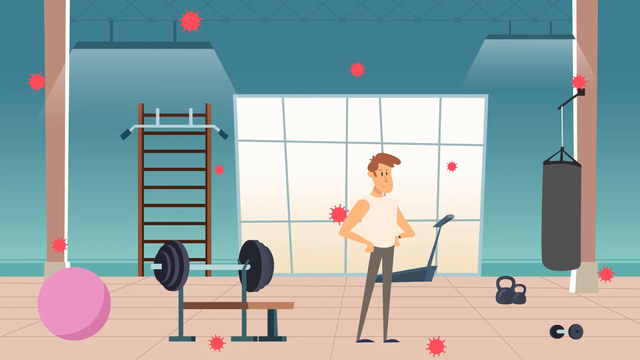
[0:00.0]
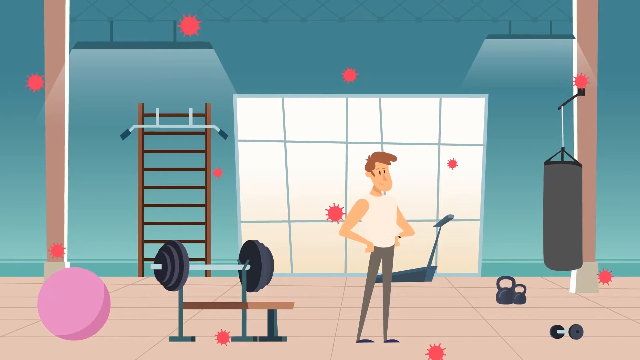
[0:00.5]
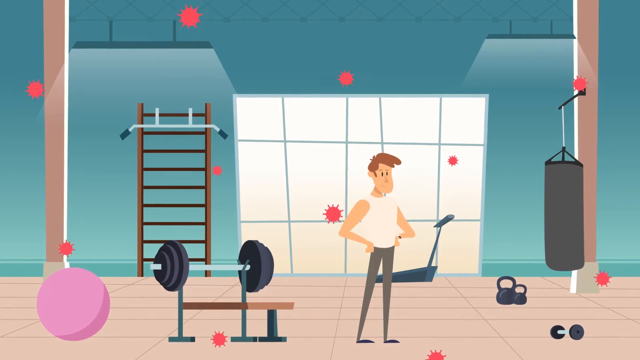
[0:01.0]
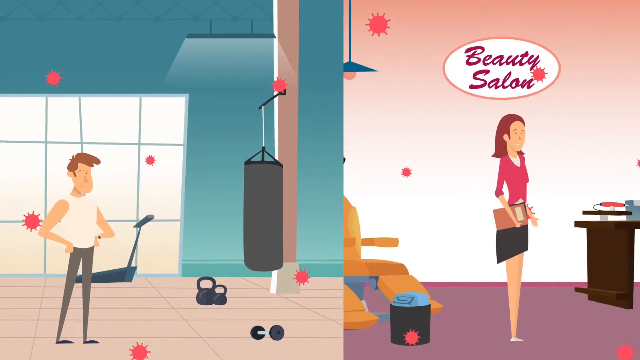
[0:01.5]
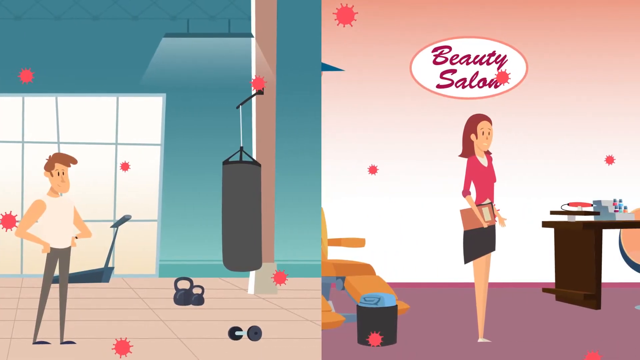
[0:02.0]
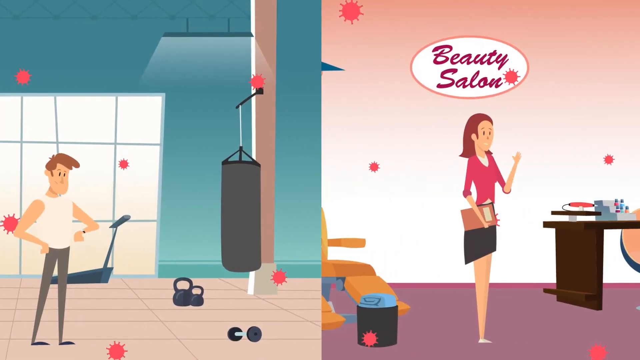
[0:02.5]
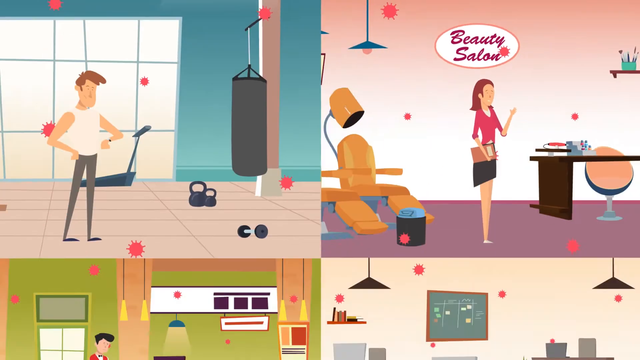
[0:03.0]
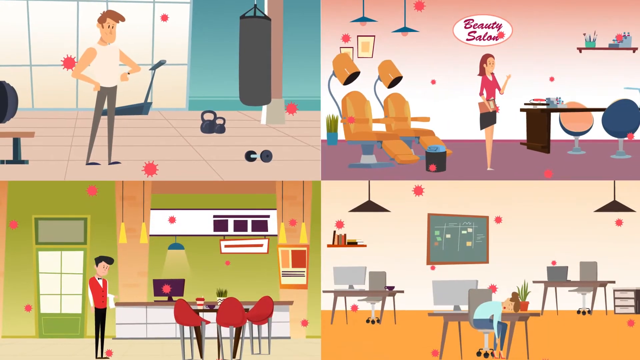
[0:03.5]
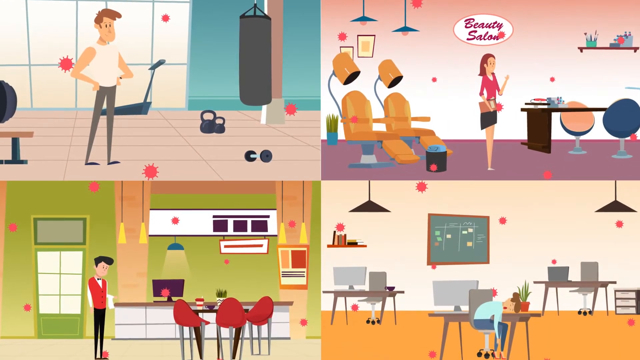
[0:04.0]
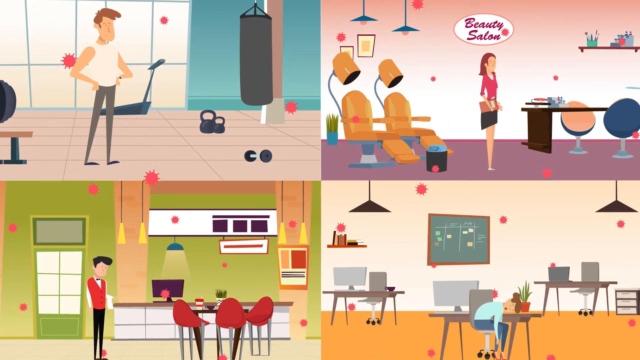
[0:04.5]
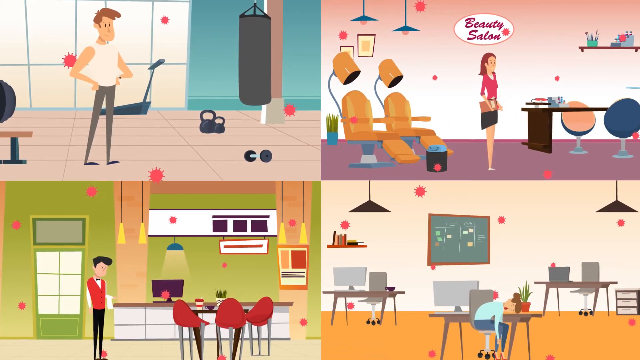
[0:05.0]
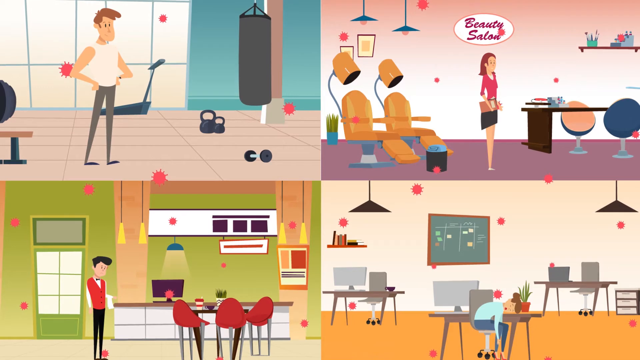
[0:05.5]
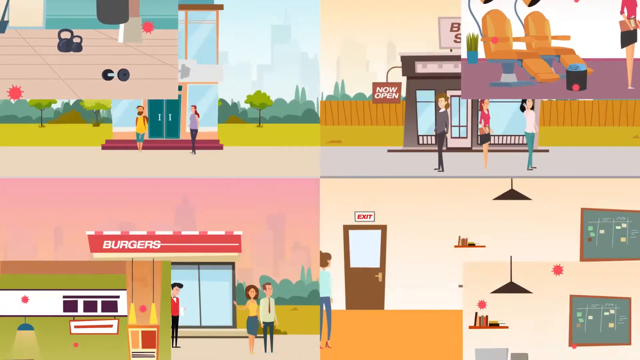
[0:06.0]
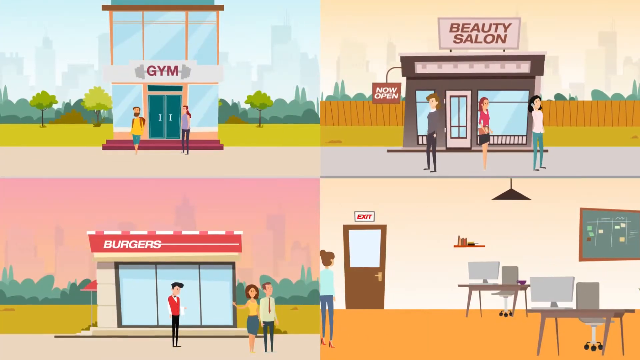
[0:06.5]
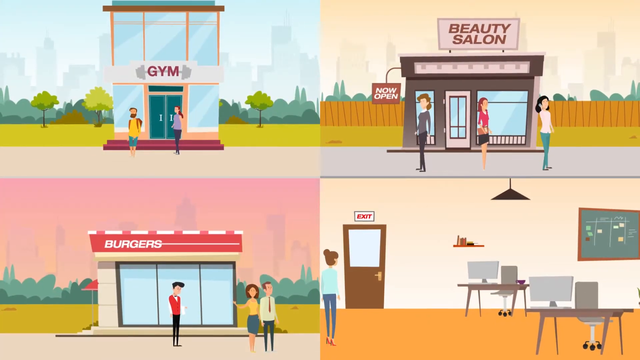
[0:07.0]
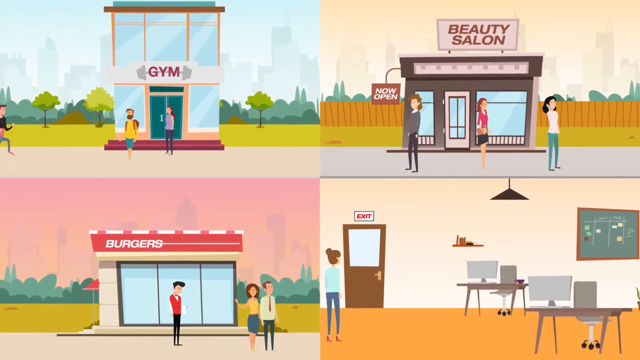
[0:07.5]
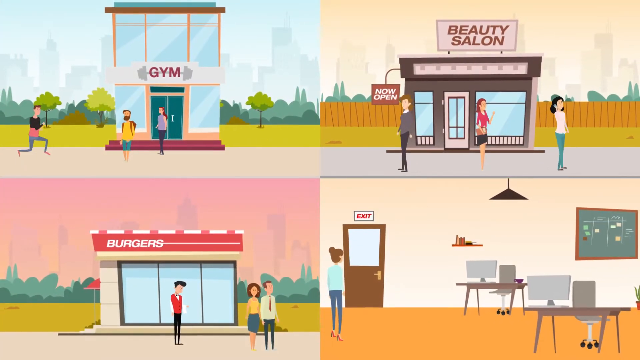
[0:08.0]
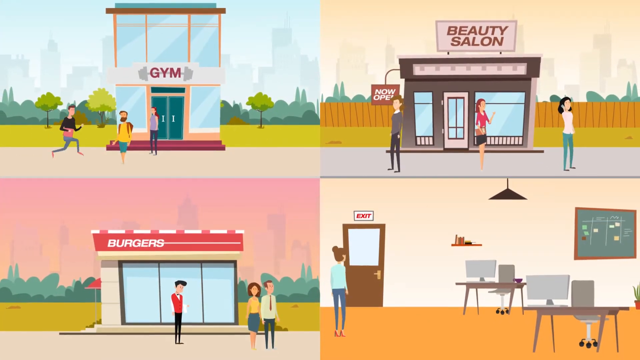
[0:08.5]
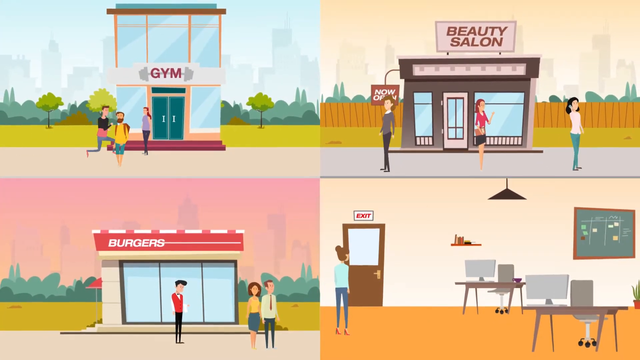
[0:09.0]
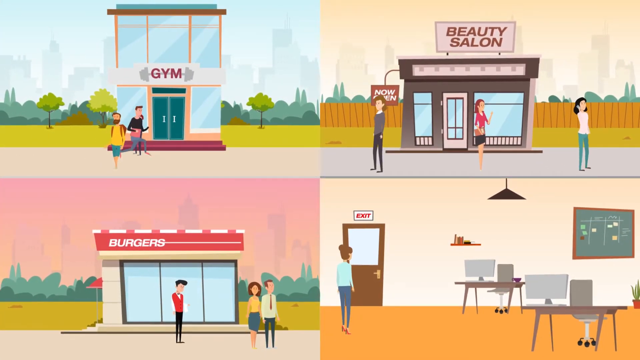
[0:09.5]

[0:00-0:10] The video is animated. The first screen shows a man standing inside a gym with his hands on his hips, with gym equipment including weights, a cardio machine and a punching bag. Red circles with spikes around them appear, possibly to represent germs. The scene shifts to the inside of a beauty salon, where a woman is standing, with a table and chairs where people would sit for hair appointments. Next, a man stands in a restaurant, and then a man sits in a chair with his head on a desk in what looks like a classroom. After these four interiors, the scene shifts to the exteriors, showing the outside of the gym, the beauty salon, a restaurant and a school.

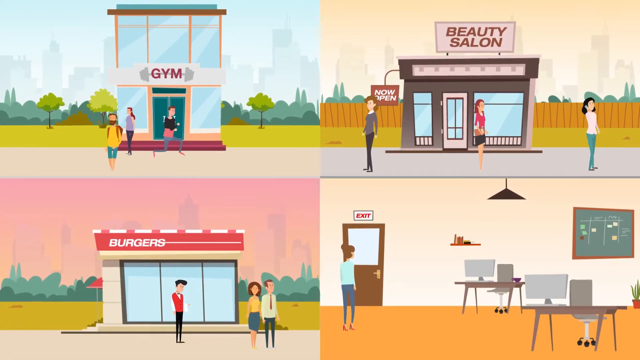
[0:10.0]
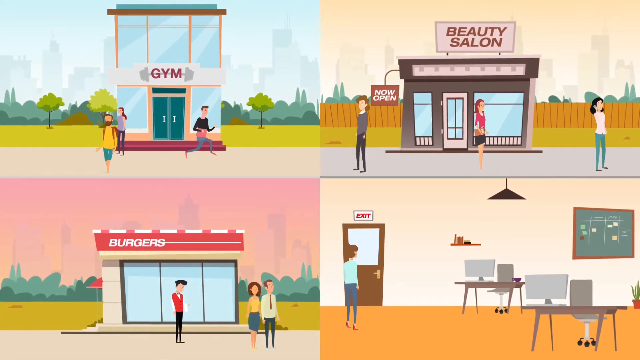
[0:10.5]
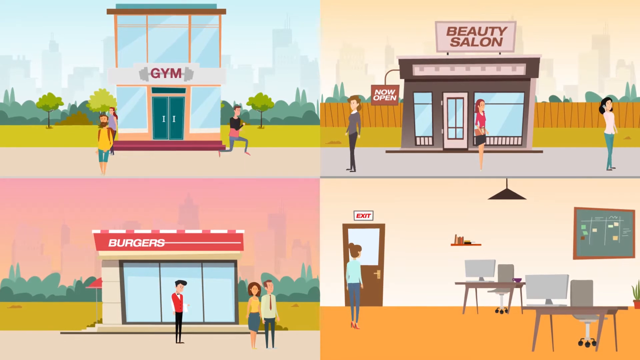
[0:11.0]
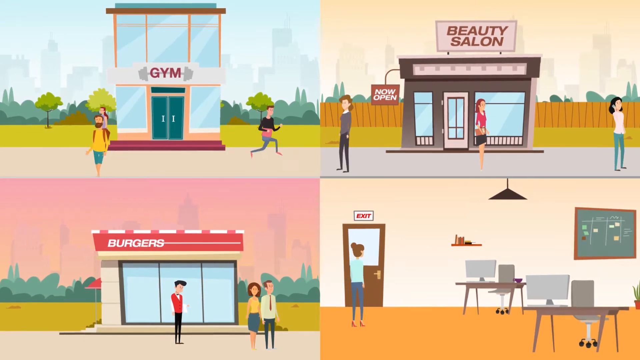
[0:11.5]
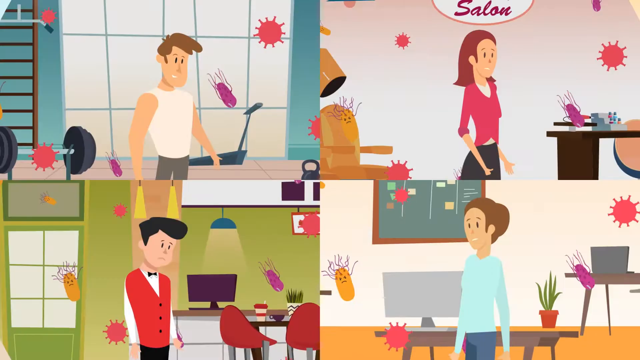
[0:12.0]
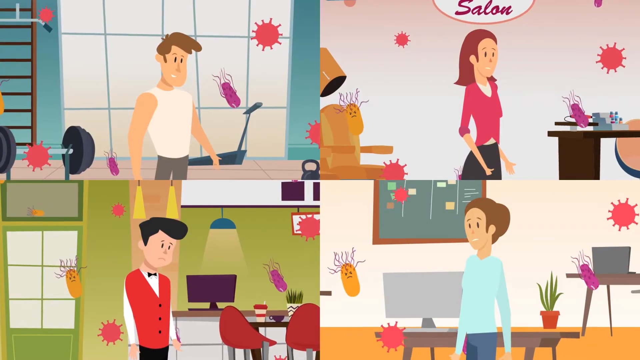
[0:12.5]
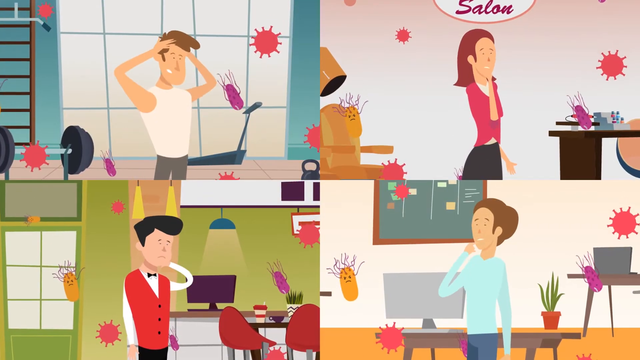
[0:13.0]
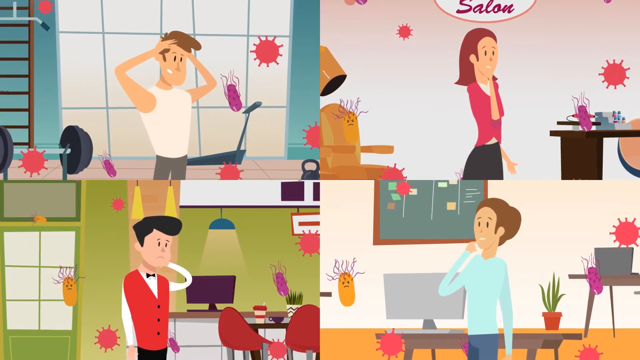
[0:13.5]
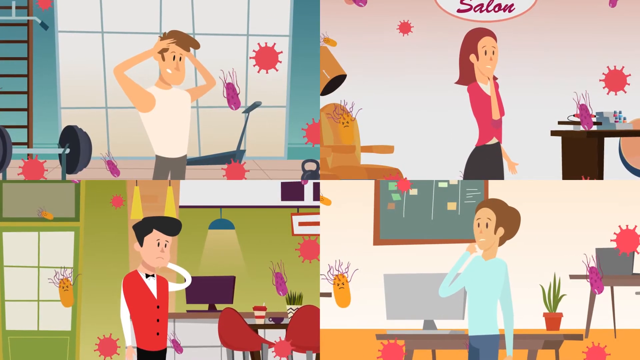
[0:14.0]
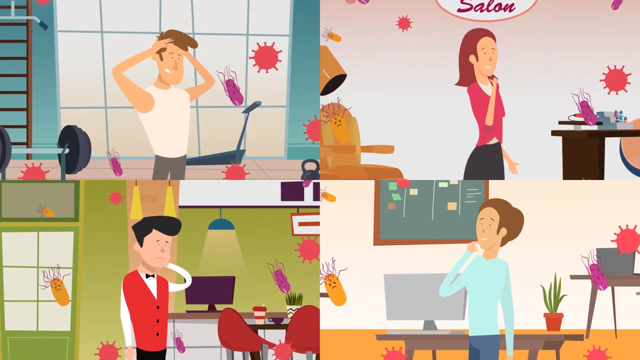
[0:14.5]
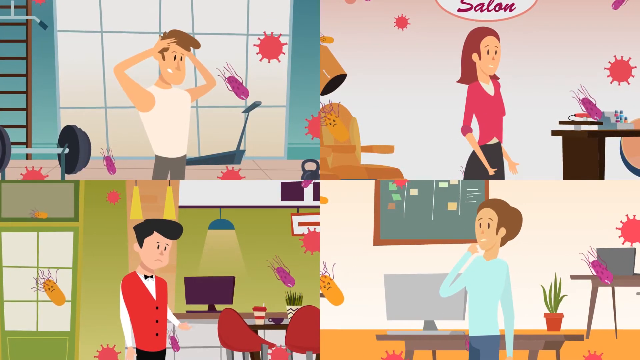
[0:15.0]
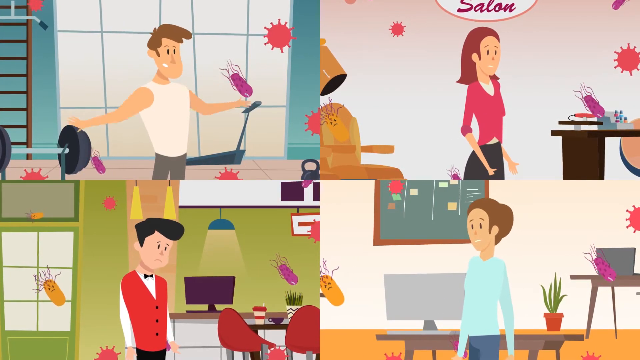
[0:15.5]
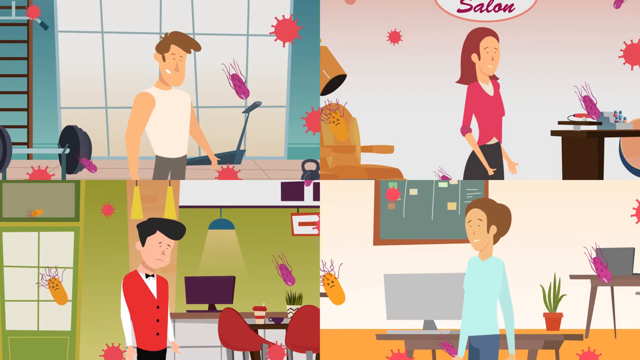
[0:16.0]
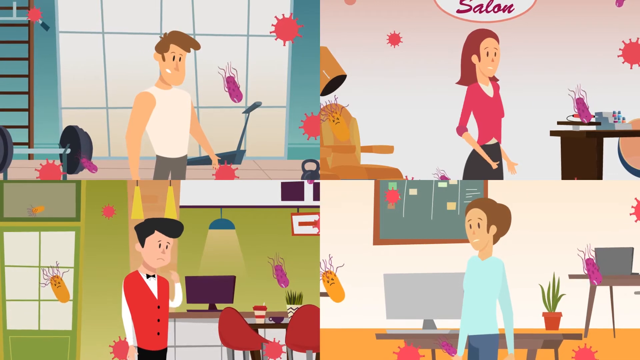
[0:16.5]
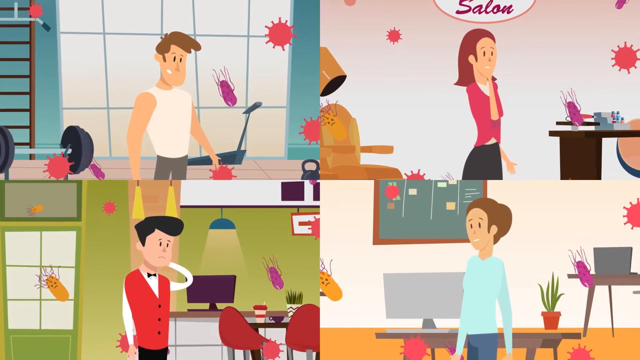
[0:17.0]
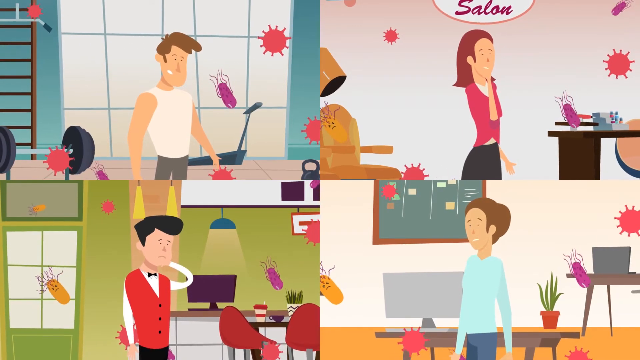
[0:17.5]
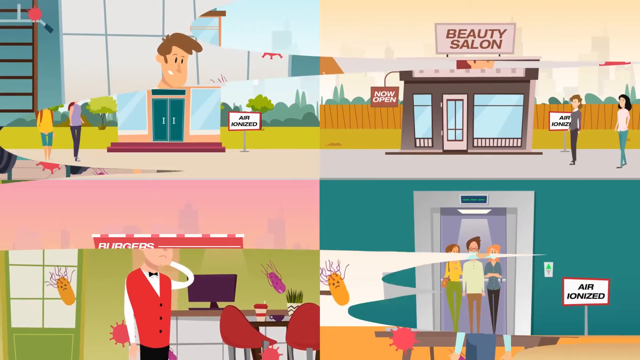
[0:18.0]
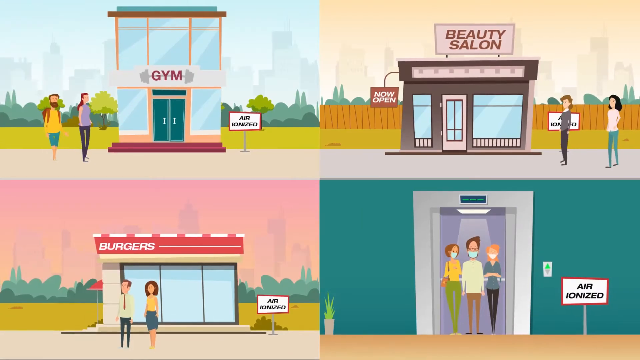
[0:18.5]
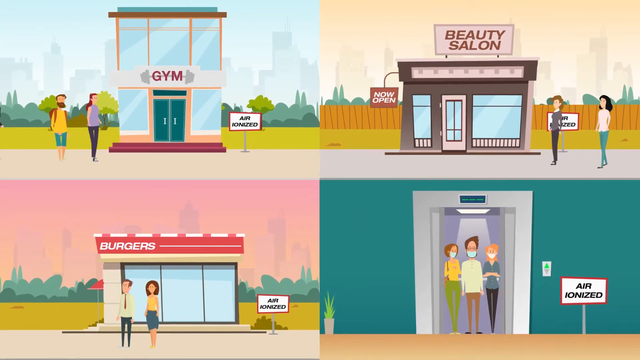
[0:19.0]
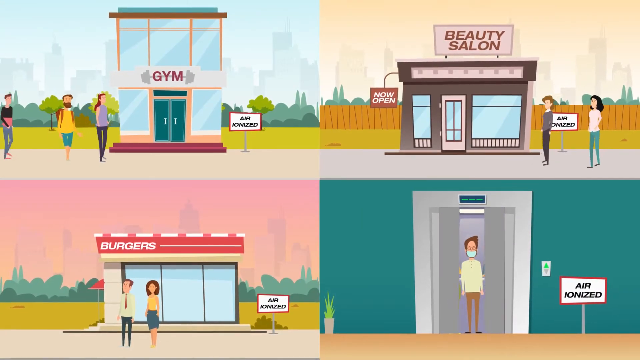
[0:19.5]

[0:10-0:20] The screen is split into four areas: the man in the gym in the upper left, the woman in the beauty salon in the upper right, a man in a restaurant in the lower left, and a woman in a classroom in the lower right. They look worried, raising their hands to their heads and scratching their hair, chin or the back of the neck. The germ symbols, red circles with spikes around them, are all over the place, and there appear to be other germ-type symbols: a tan oblong with an unhappy face on it and a purple squid-like symbol.